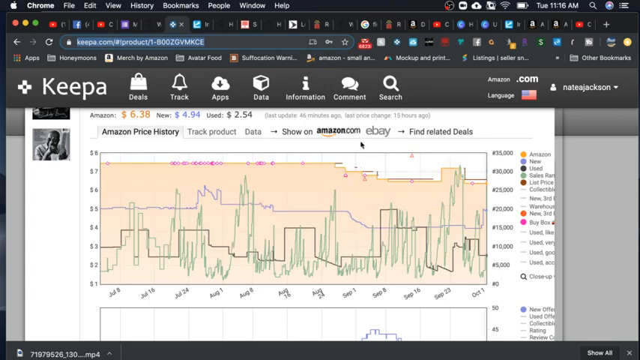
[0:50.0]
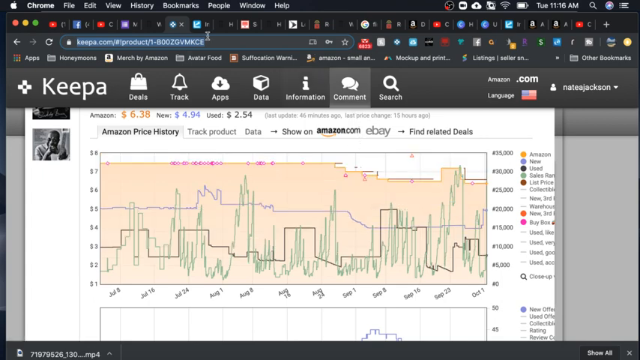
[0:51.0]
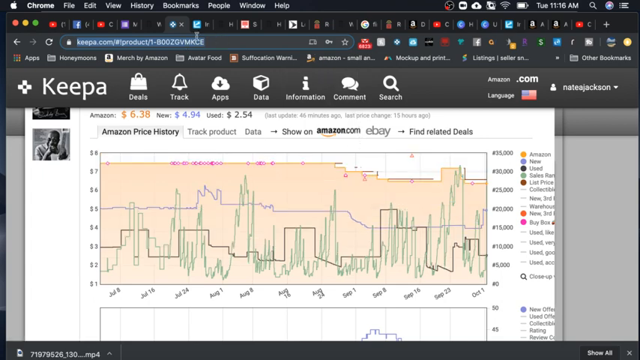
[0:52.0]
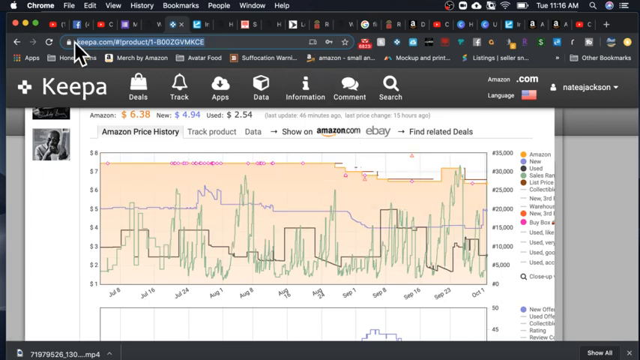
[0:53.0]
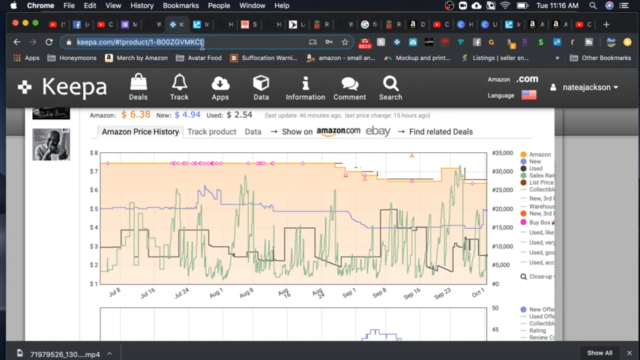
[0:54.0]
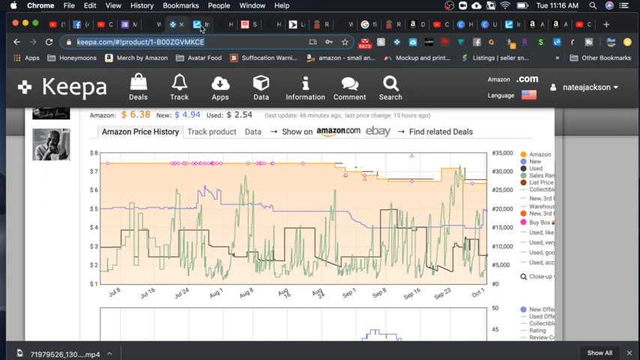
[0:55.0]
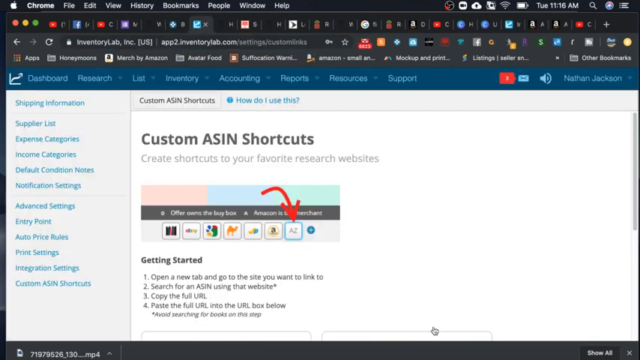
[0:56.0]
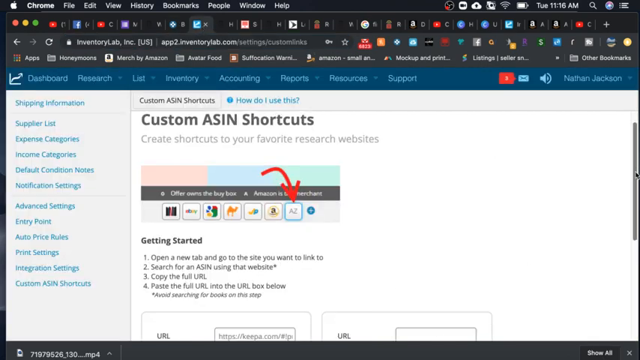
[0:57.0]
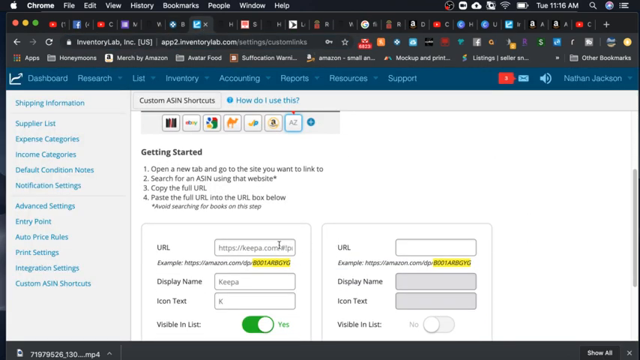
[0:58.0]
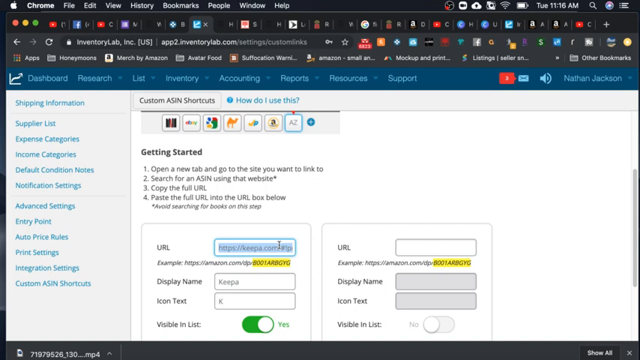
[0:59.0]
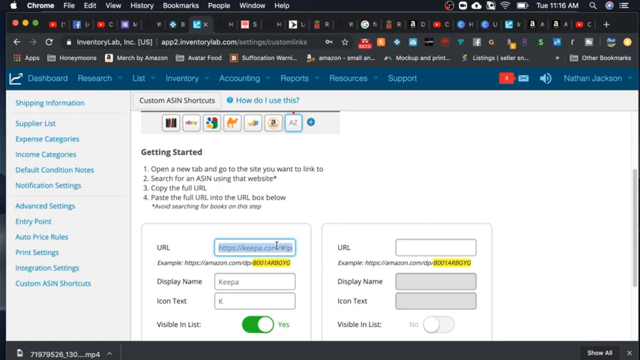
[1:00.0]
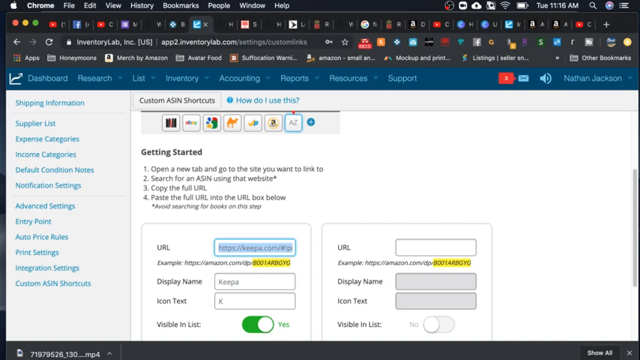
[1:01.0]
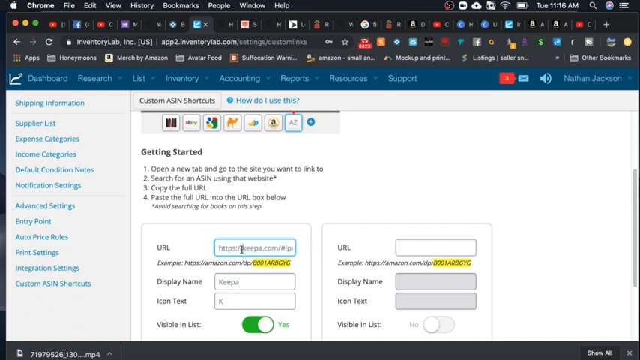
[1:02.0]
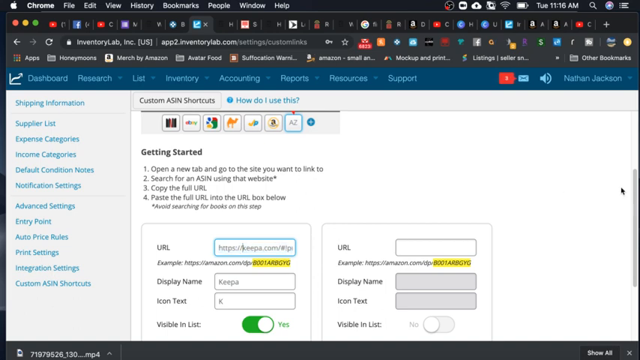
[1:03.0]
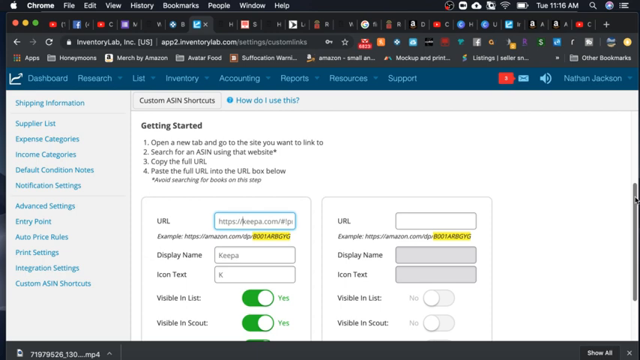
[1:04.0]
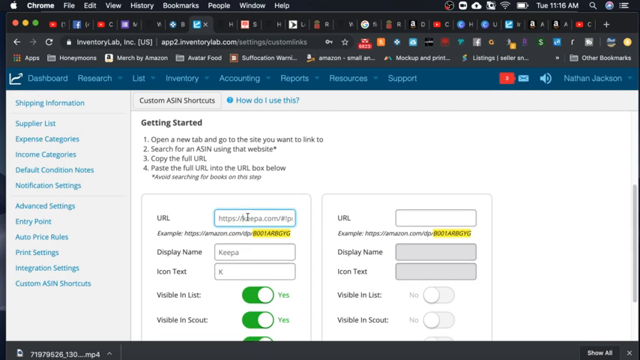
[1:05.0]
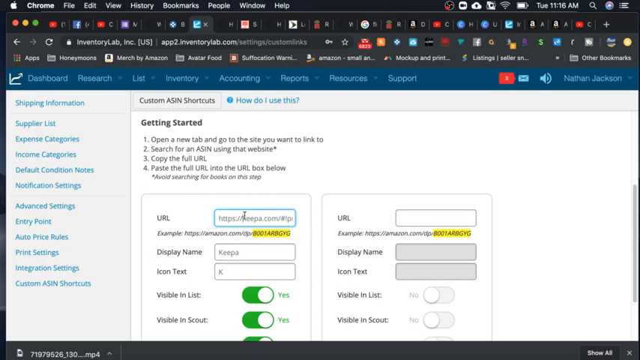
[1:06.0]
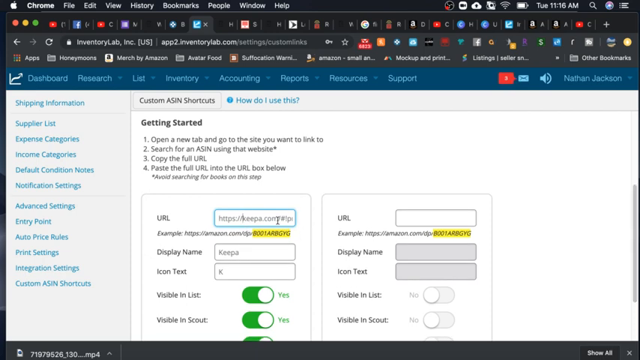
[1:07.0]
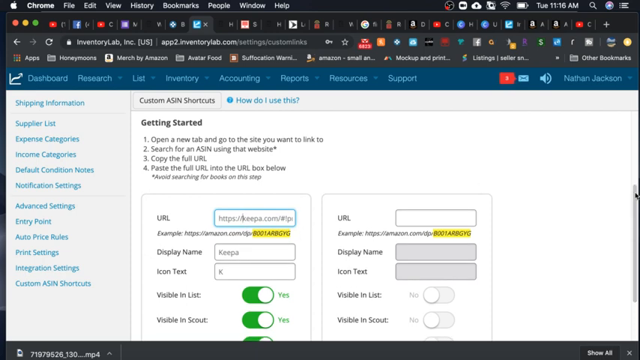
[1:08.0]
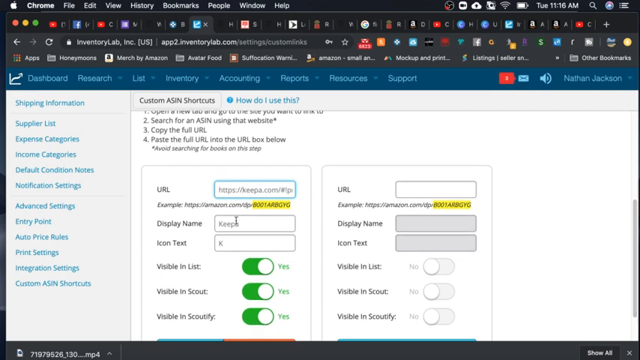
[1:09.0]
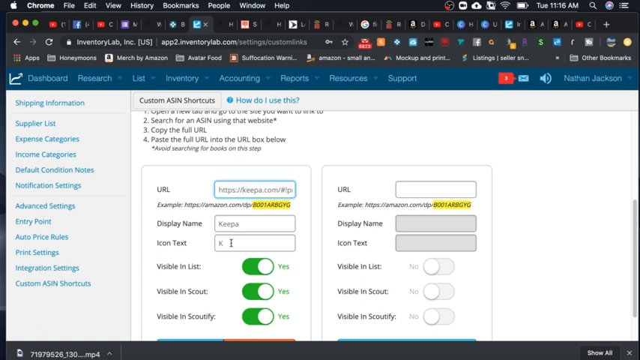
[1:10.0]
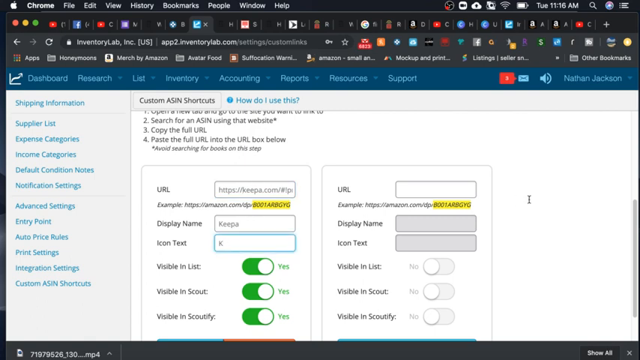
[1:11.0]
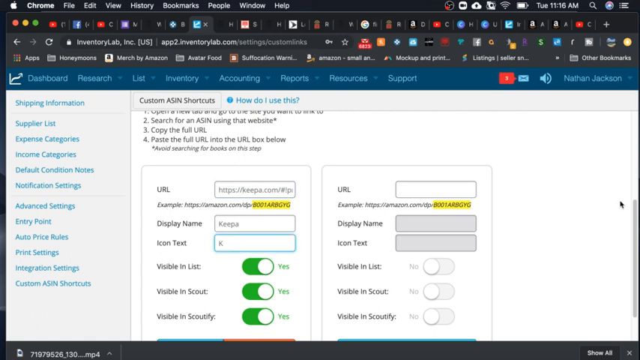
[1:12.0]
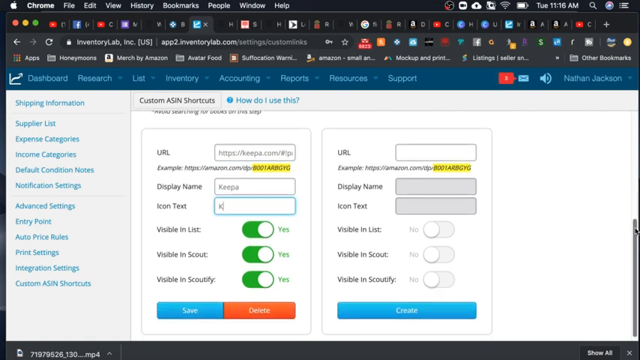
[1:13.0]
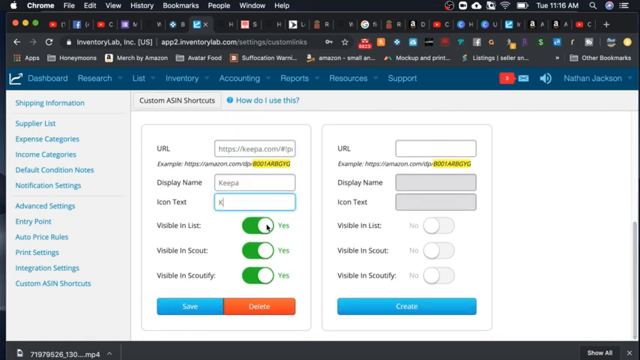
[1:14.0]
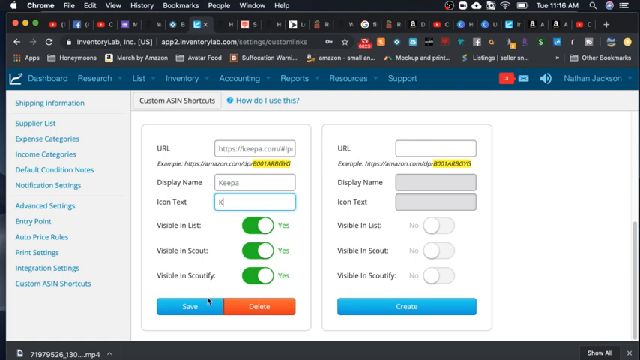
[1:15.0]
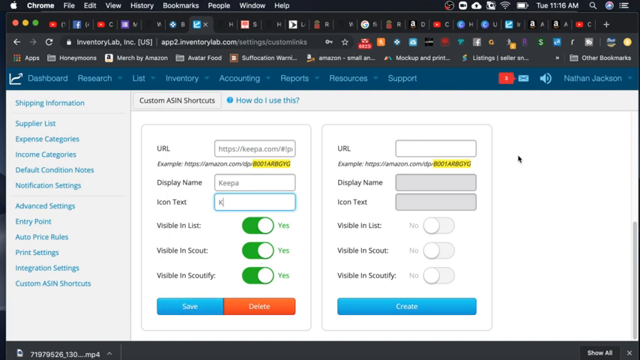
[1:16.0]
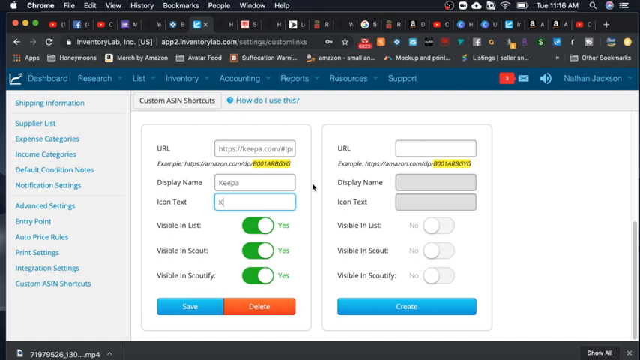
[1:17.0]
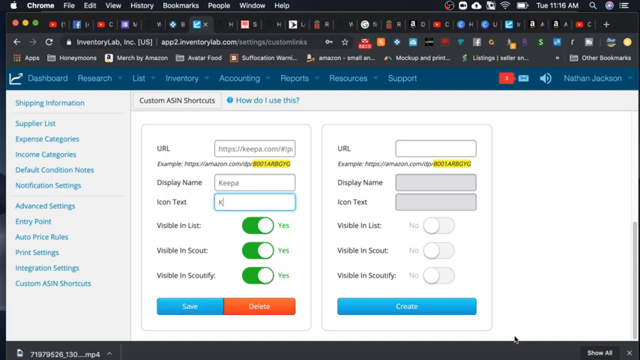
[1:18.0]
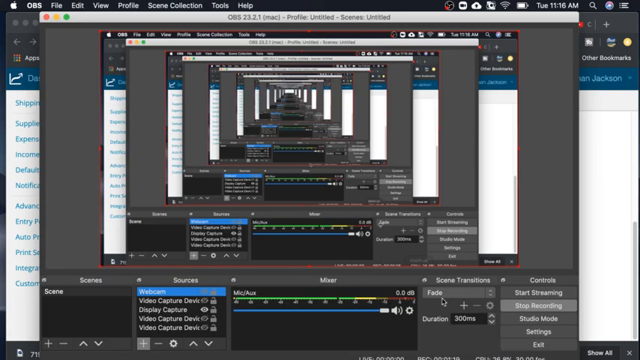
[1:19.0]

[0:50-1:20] The Keepa tab has a black navigation bar along the top with about five navigation icons, reading "Deals, Track, Apps, Data, Information, Comment, and Search." The user goes back to the previous tab and scrolls down to a section reading "Getting Started" with four steps: "Open a new tab and go to the site you want to link to," then "search for an ASIN using that website" with an asterisk next to it, then "copy the full URL," and then "paste the full URL into the URL box below." Beneath that is an asterisk with some text in italics. Two boxes appear side by side on the page, each with three spaces on its top half; they look to be identical, and there are three push buttons below them.